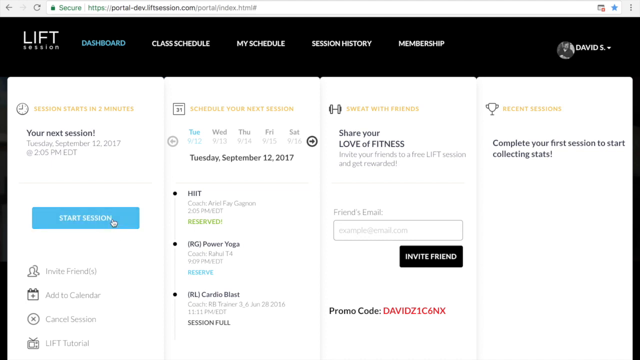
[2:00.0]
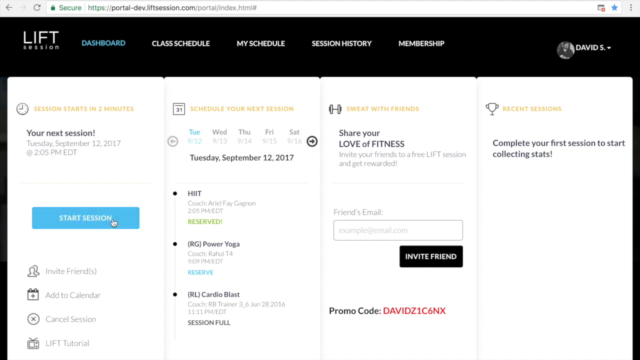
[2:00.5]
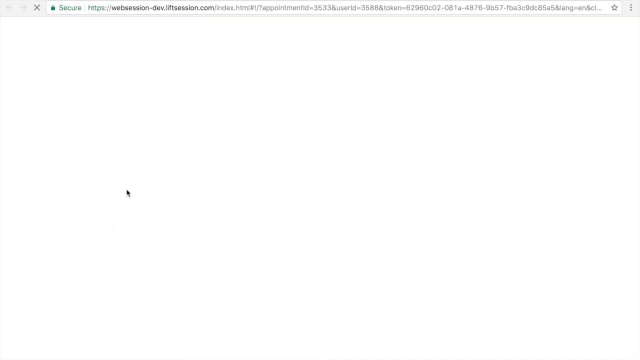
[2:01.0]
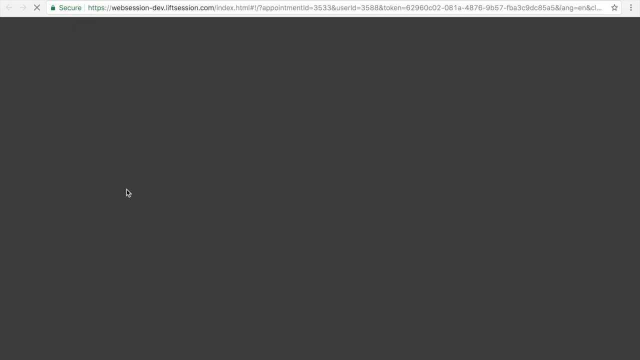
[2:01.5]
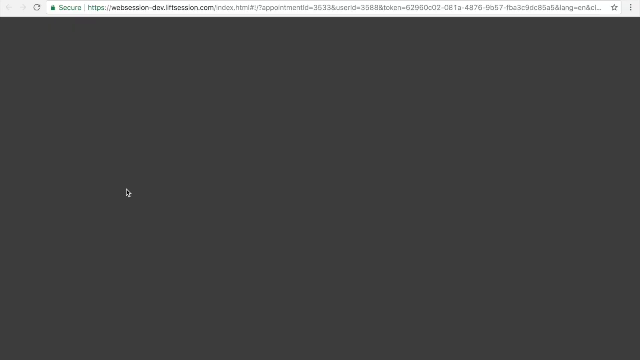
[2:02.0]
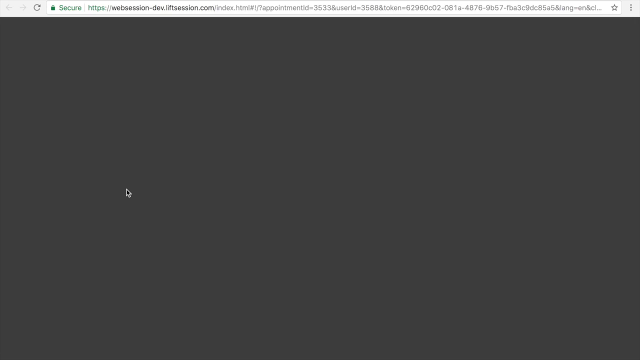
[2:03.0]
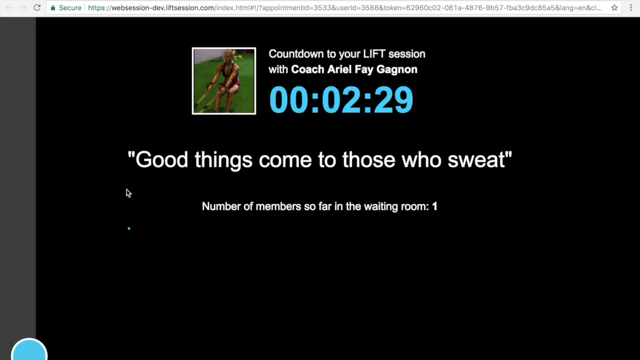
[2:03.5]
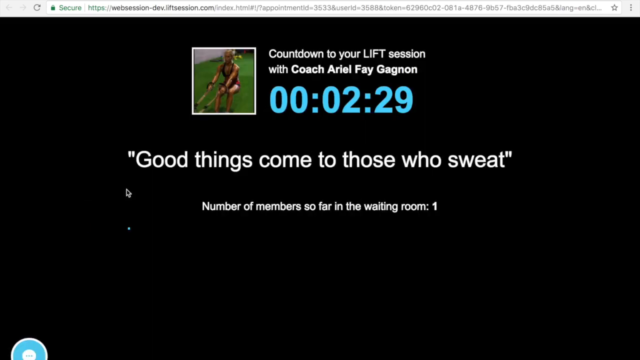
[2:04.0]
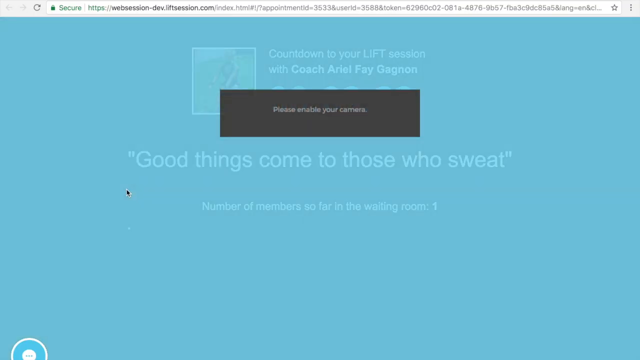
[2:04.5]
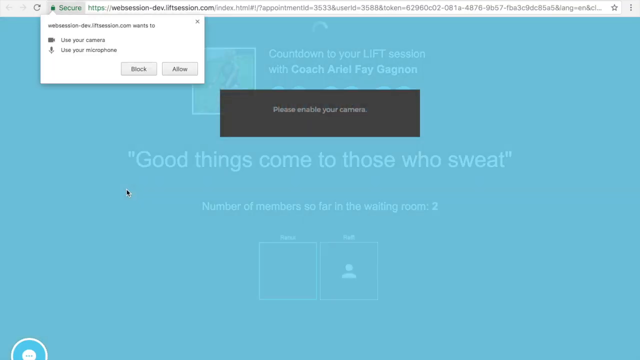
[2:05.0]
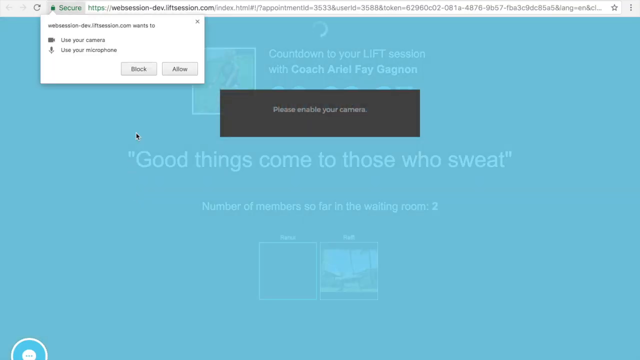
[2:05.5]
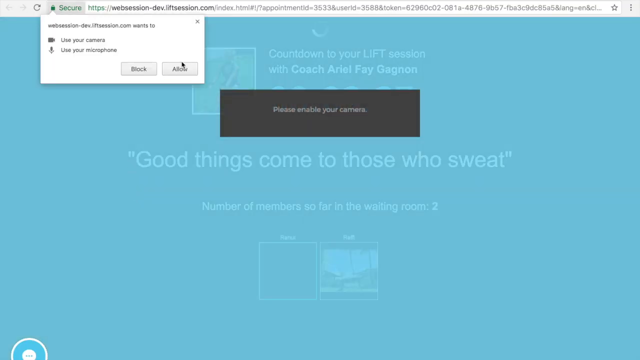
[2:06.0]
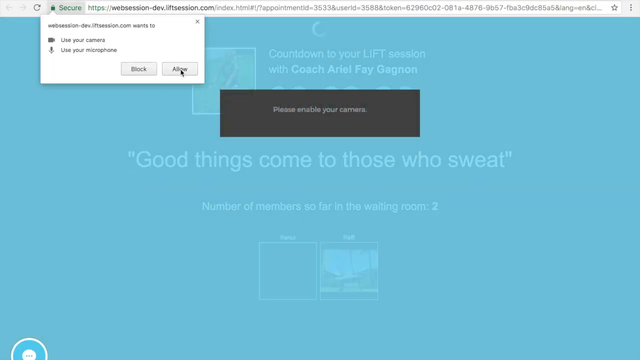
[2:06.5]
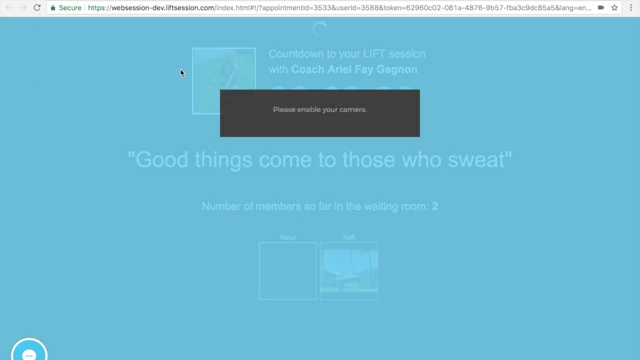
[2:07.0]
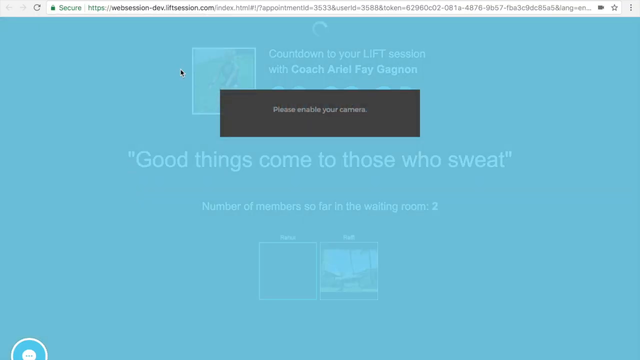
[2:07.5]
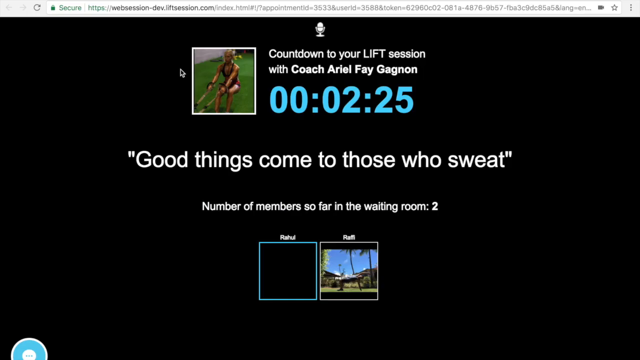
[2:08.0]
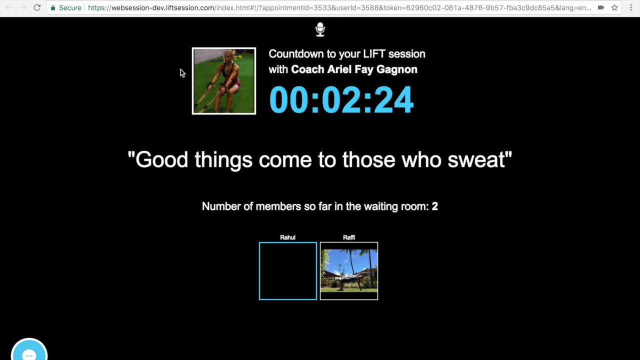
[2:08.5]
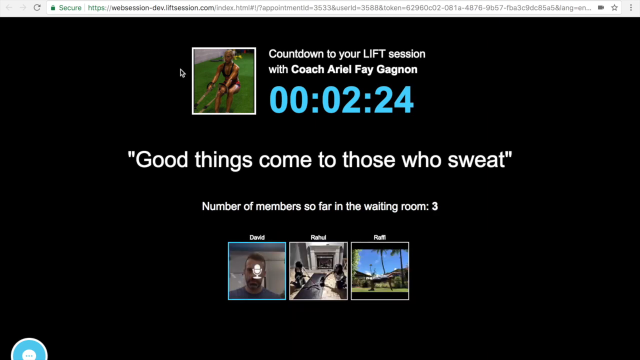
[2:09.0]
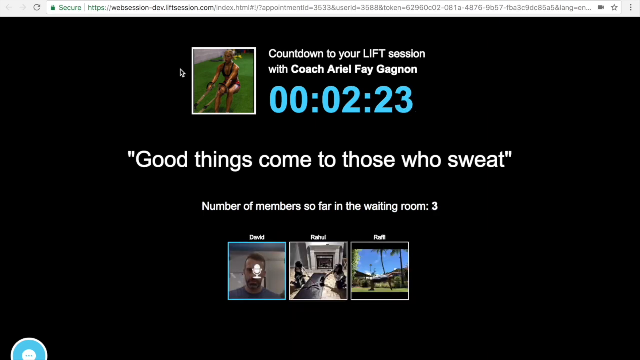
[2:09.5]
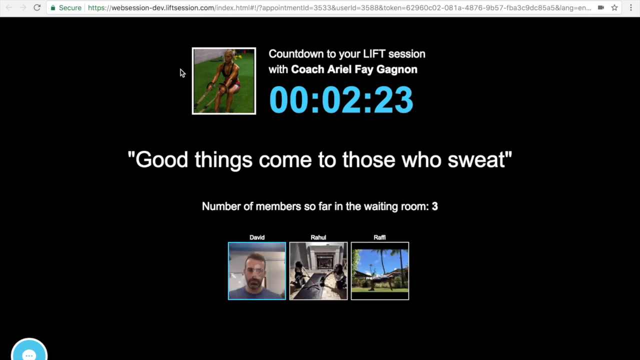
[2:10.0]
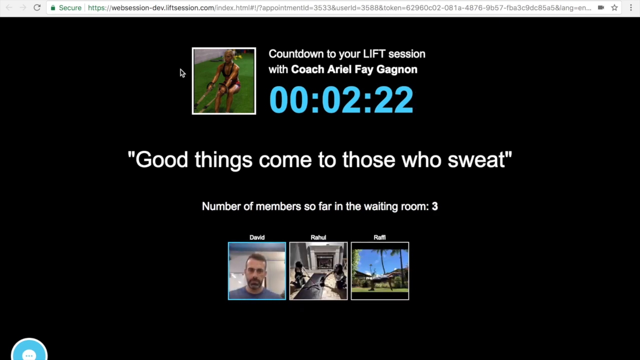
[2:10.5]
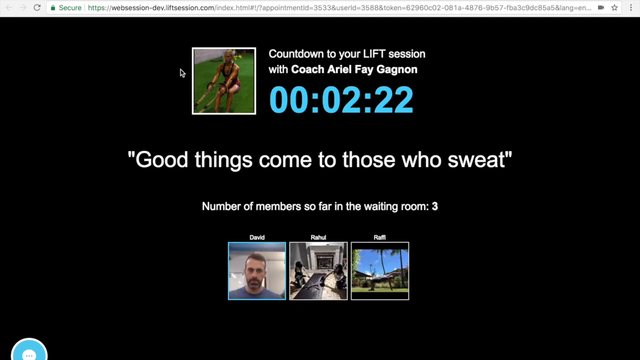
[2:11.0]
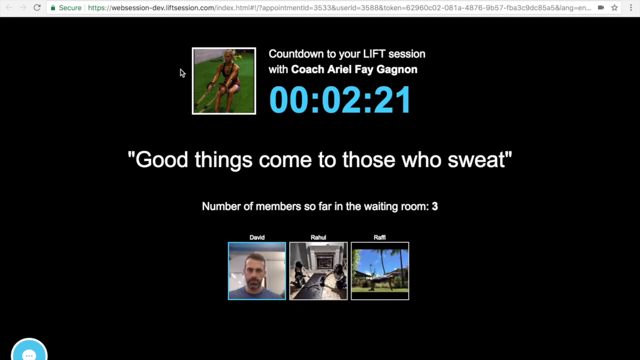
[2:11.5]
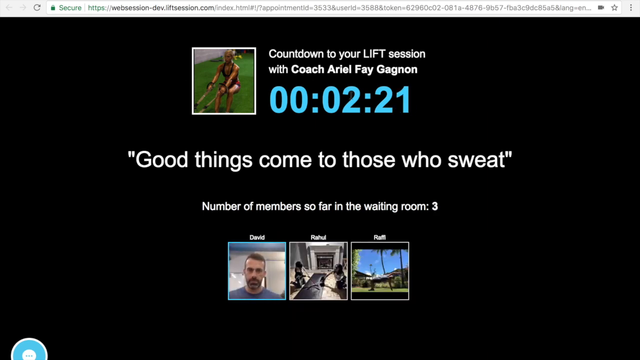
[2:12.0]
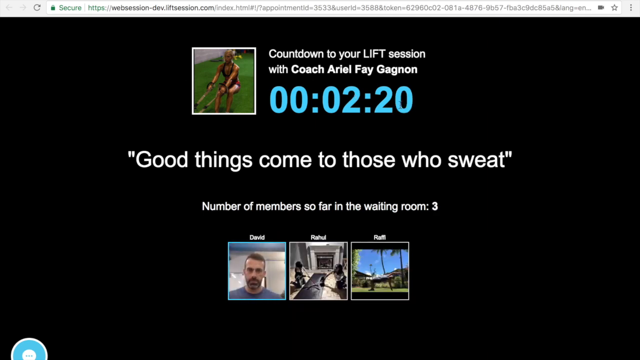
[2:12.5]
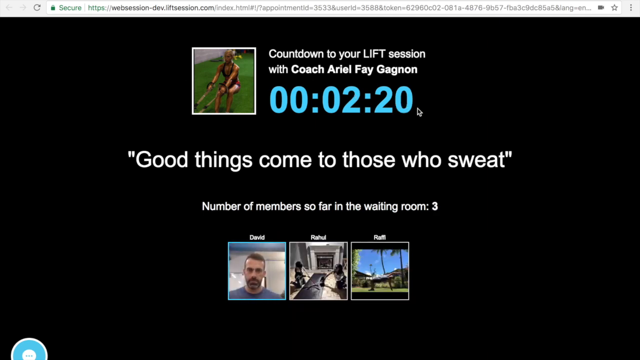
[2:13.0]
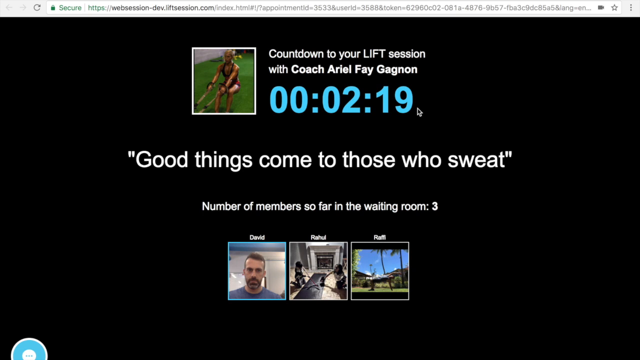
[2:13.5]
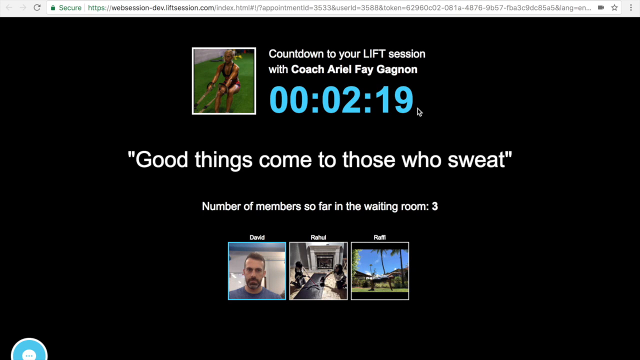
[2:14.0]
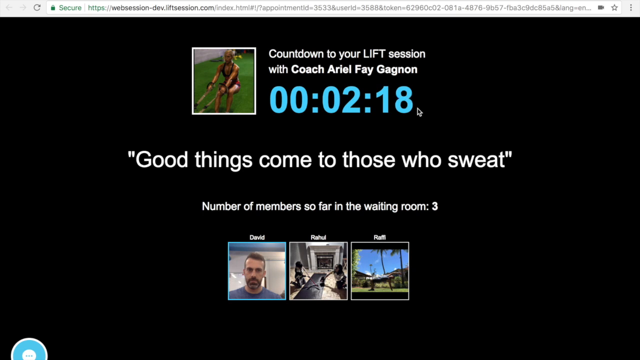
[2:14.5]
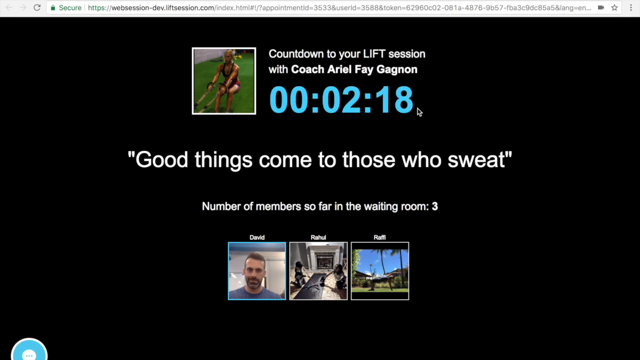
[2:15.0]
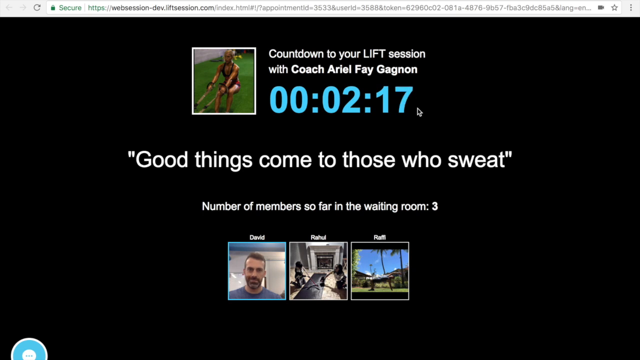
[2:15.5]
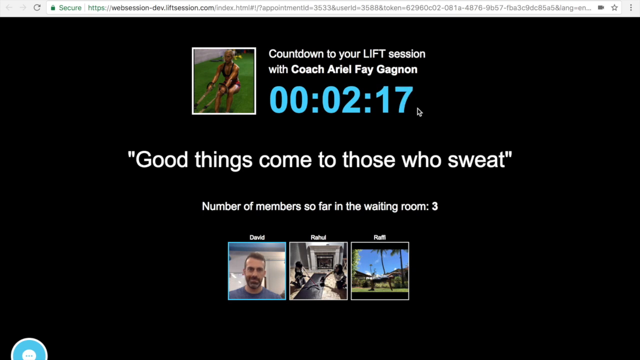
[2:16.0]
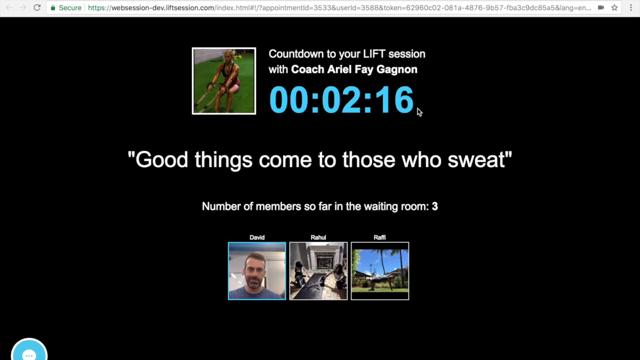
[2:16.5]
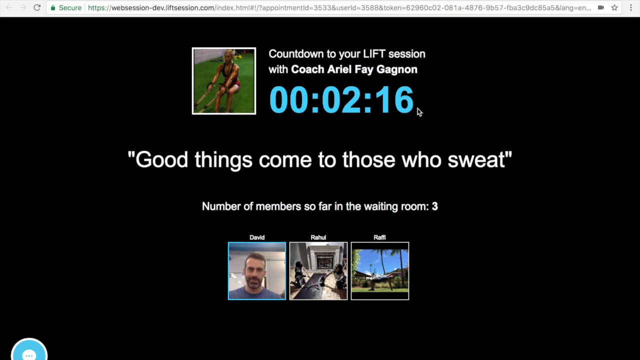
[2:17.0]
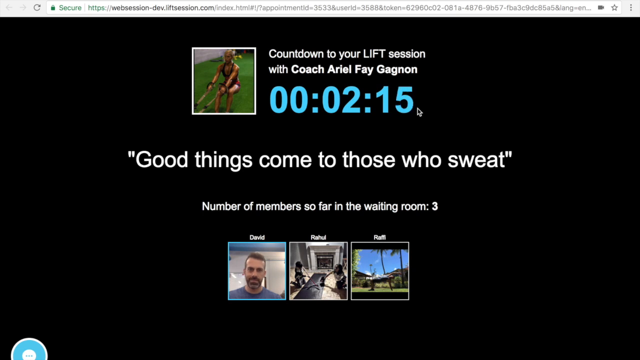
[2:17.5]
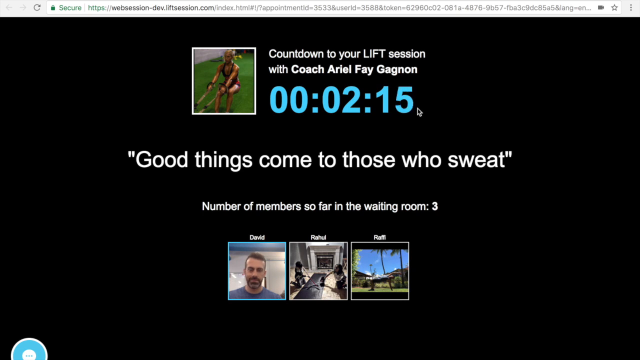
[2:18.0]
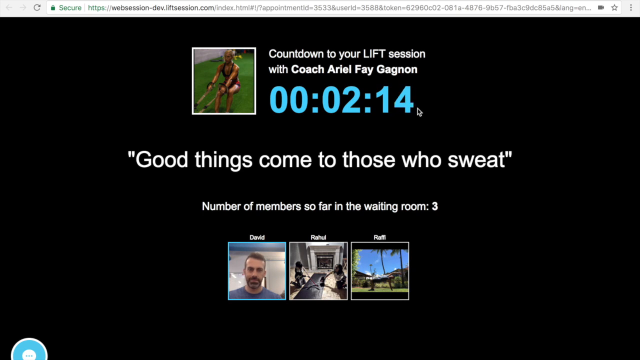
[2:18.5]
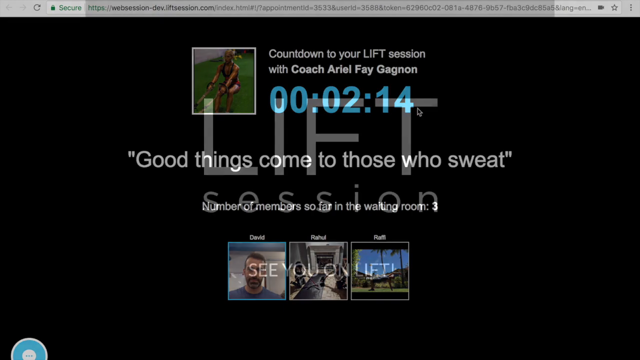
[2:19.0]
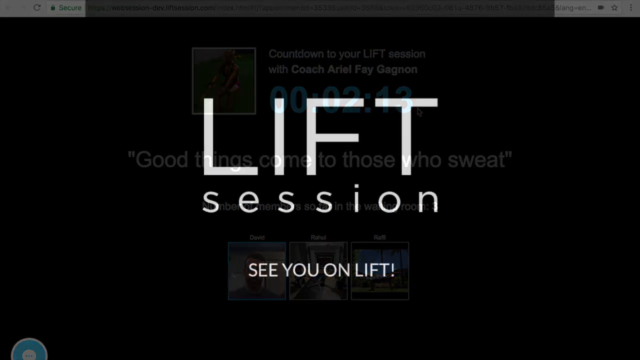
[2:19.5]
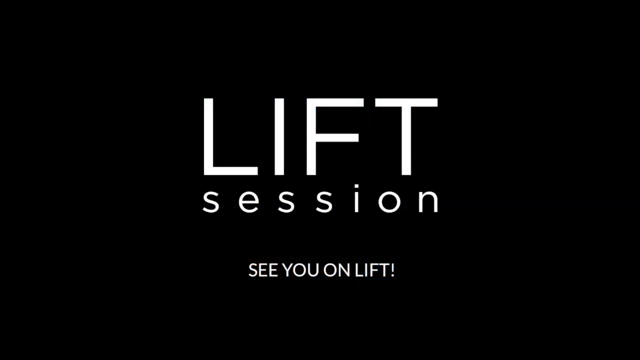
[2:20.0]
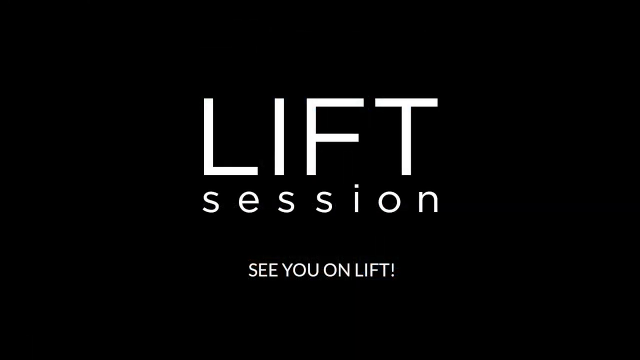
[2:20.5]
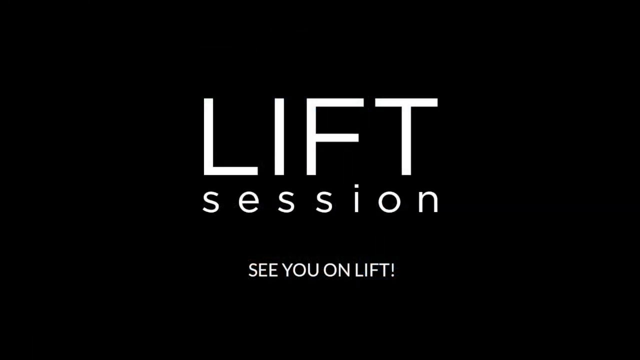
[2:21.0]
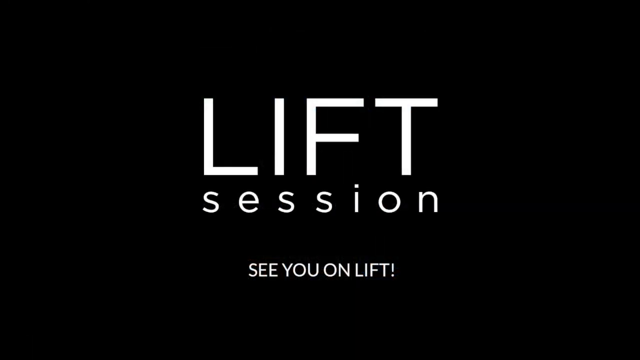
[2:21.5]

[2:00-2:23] A web page shows the LIFT Session logo in the upper left corner, with five tabs to its right labelled "Dashboard," "Class Schedule," "My Schedule," "Session History" and "Membership." The upper part of the page is black and the bottom part white. The cursor hovers on the left side over a blue button labelled "Start Session" and clicks it, and the background fades to grey. A photo of a woman water skiing appears in the upper middle of the page. To its right, white text reads "Countdown to your LIFT session with Coach Ariel Fay Gagnon," beneath it a blue countdown timer reads "00:02:28," beneath that white text reads "Good things come to those who sweat," and smaller white text in the middle reads "Number of members so far in the waiting room: 1." The background is covered in a teal overlay, and in its middle a black pop-up with grey text says "Please enable your camera." A pop-up appears in the upper left of the webpage, and the cursor moves to a button labelled "Allow" in its lower right and clicks it, making the pop-up disappear. The timer reads "00:02:24" and the waiting-room member count changes to 3. Below, a picture of a blue sky and palm trees with a microphone symbol over it appears, which changes to three videos at the bottom of the page labelled "David," "Rahul" and "Raffi" in white text. The cursor moves to the right side of the blue countdown timer. The image under David shows a man with brown hair and a beard facing the camera. The video fades to a black screen with white text reading "LIFT session" and beneath it "See You On Life!"